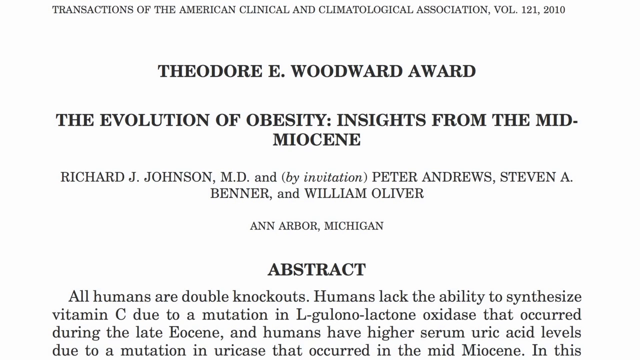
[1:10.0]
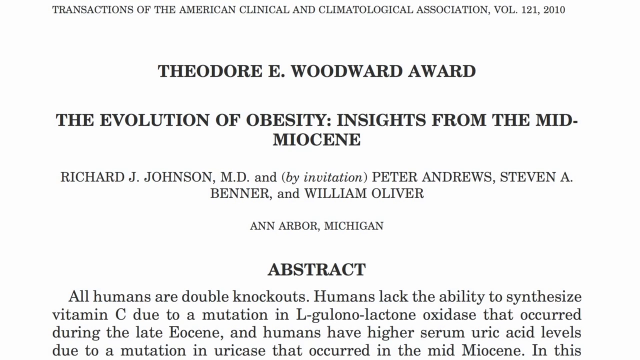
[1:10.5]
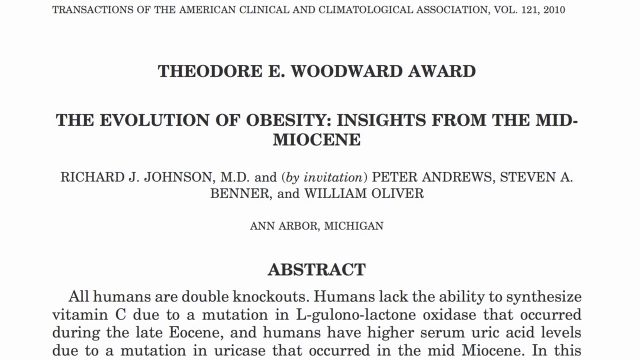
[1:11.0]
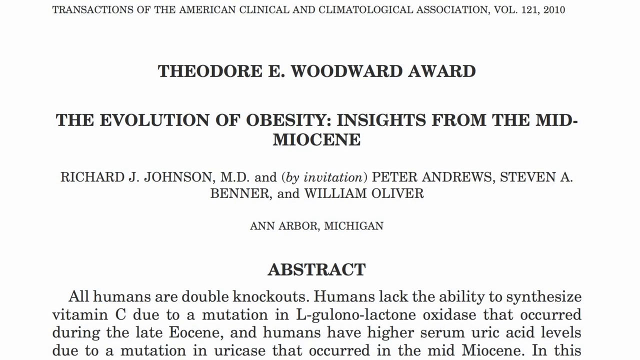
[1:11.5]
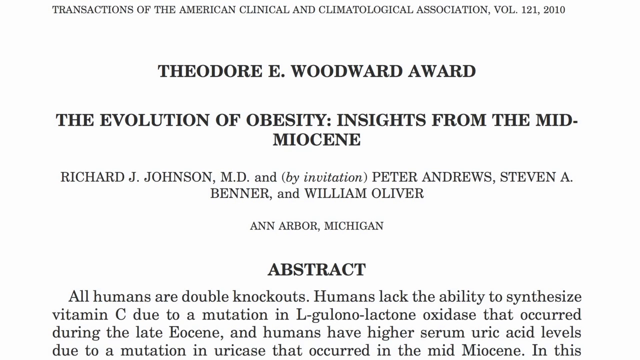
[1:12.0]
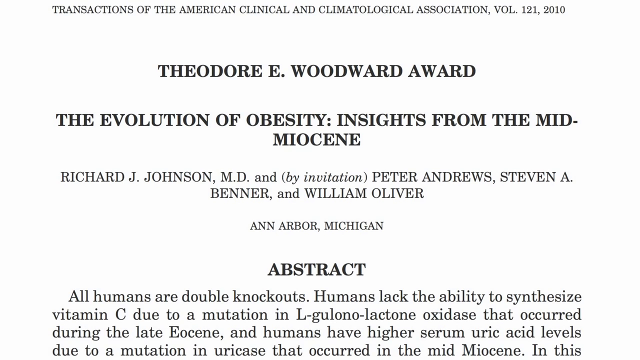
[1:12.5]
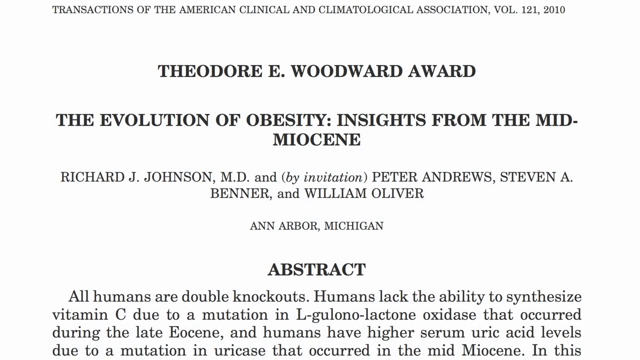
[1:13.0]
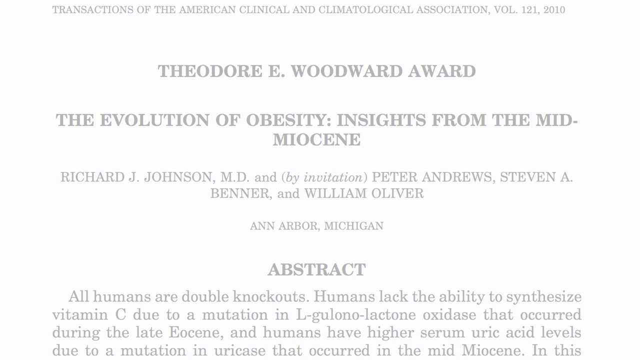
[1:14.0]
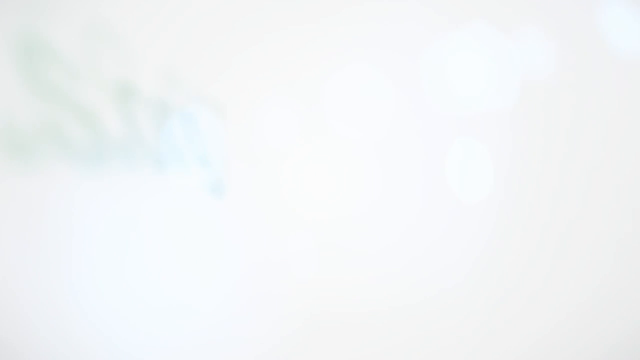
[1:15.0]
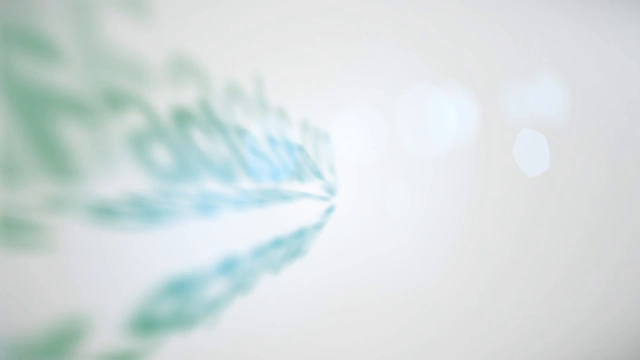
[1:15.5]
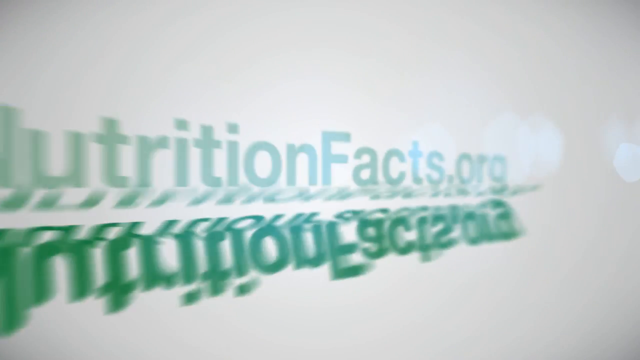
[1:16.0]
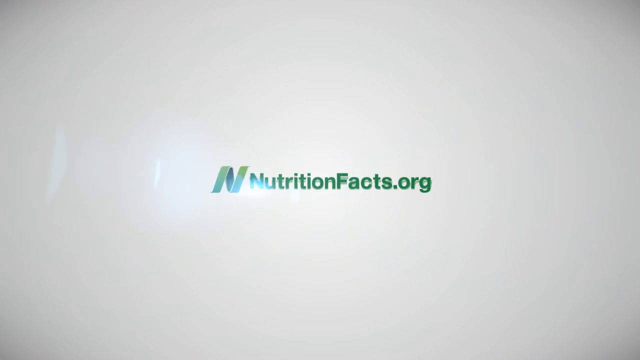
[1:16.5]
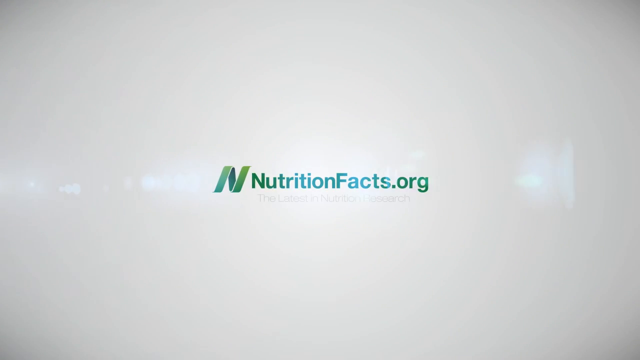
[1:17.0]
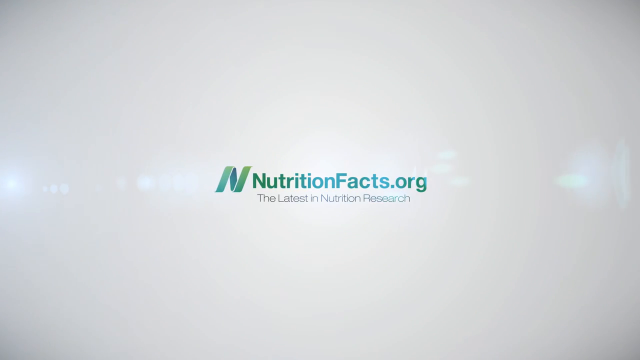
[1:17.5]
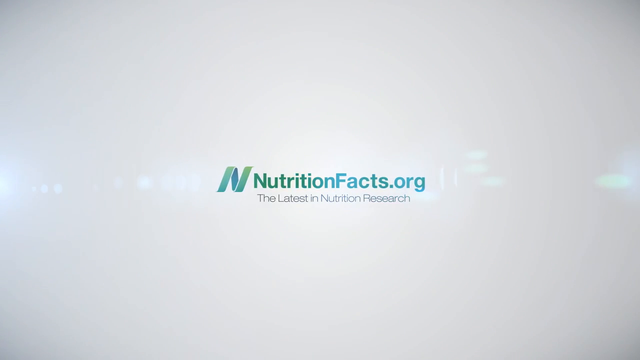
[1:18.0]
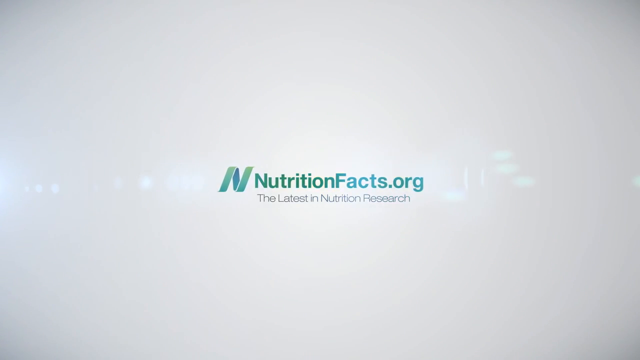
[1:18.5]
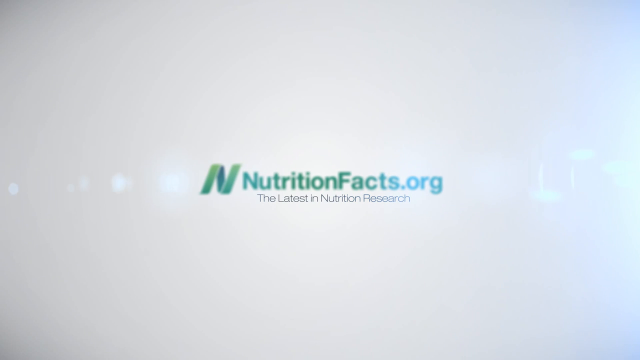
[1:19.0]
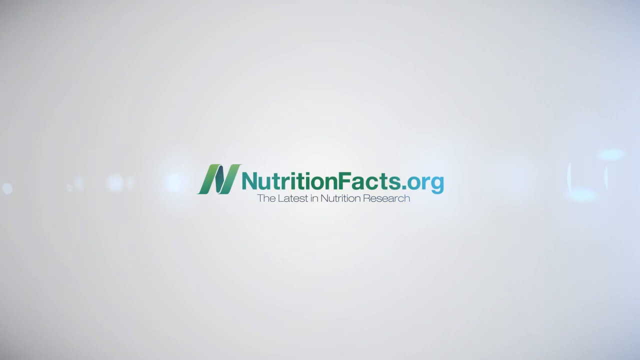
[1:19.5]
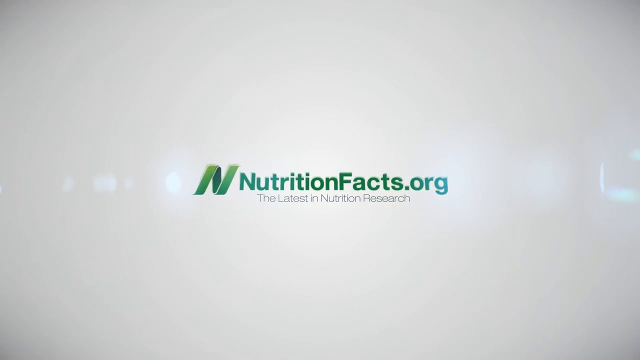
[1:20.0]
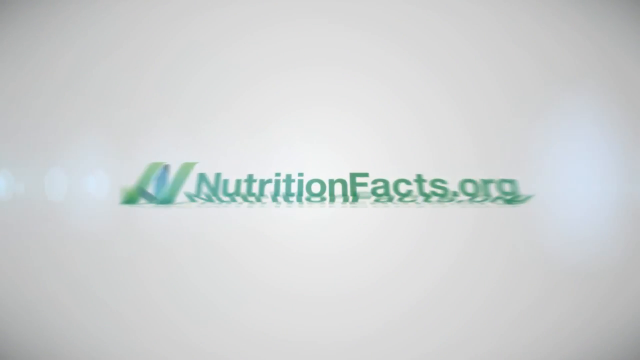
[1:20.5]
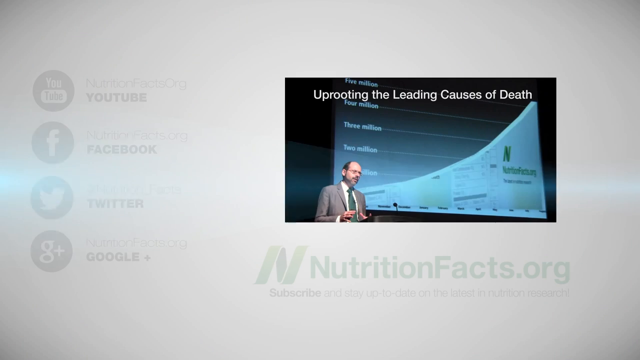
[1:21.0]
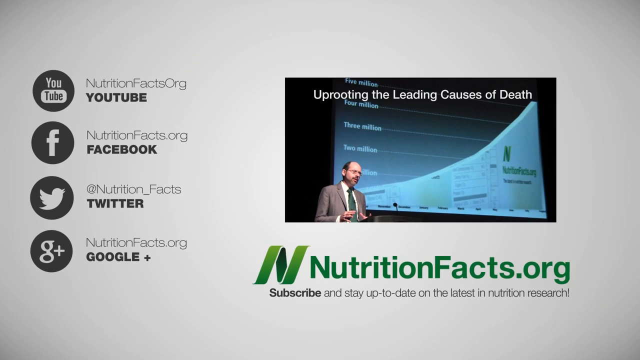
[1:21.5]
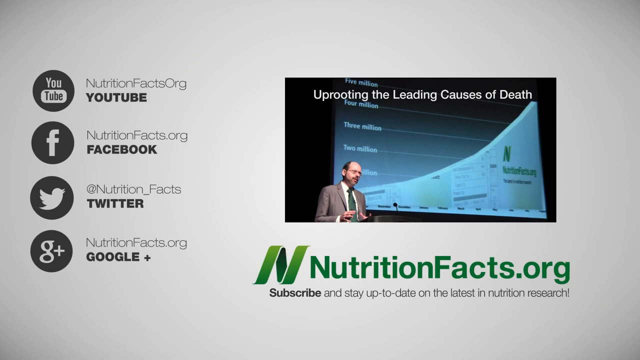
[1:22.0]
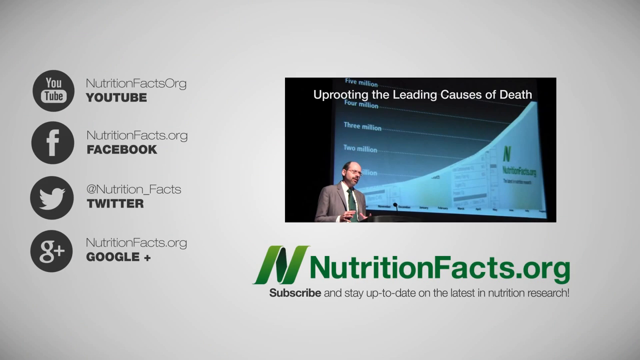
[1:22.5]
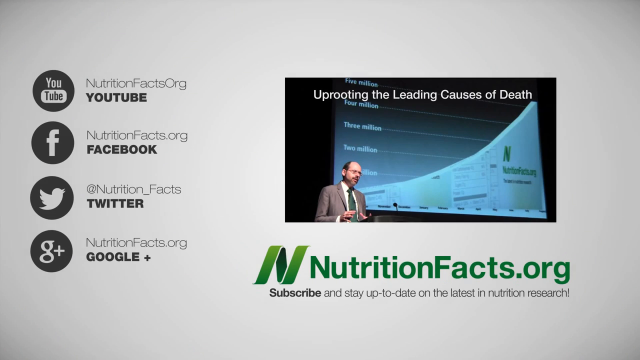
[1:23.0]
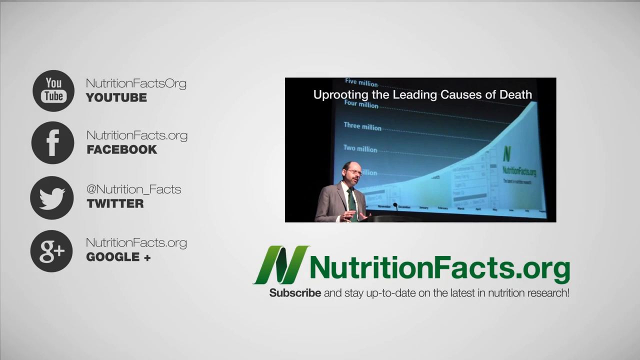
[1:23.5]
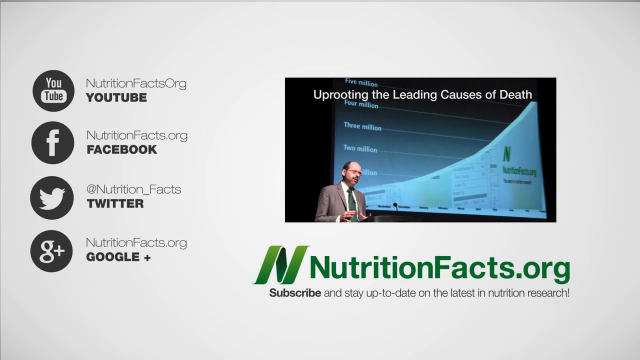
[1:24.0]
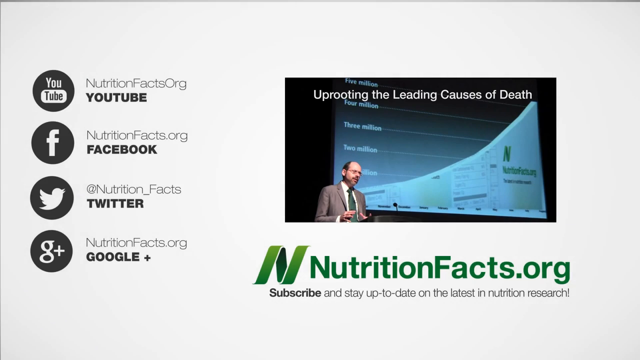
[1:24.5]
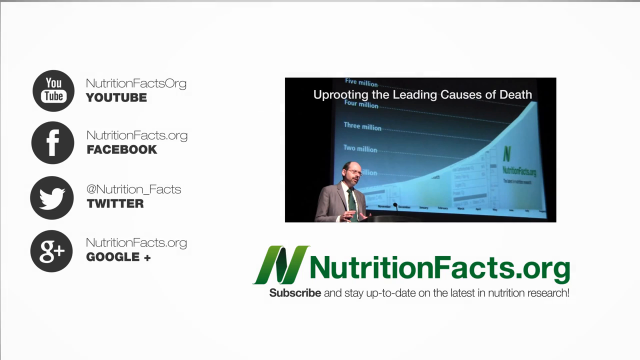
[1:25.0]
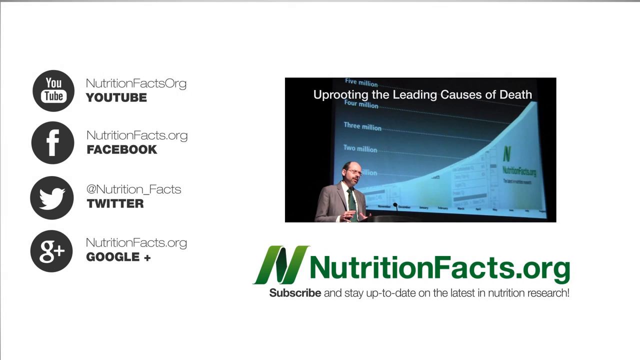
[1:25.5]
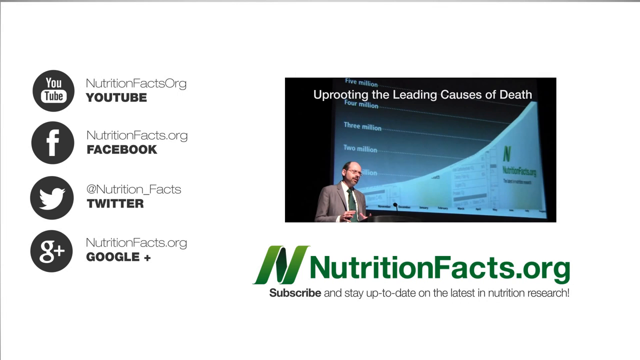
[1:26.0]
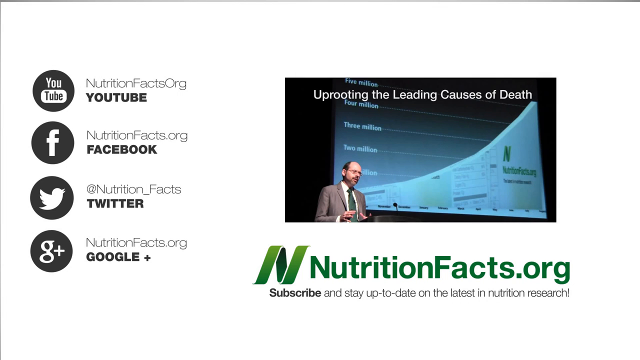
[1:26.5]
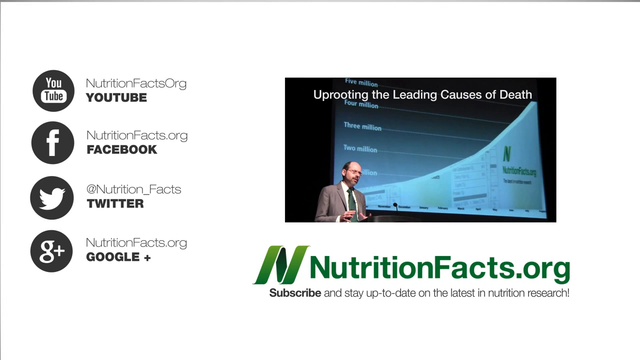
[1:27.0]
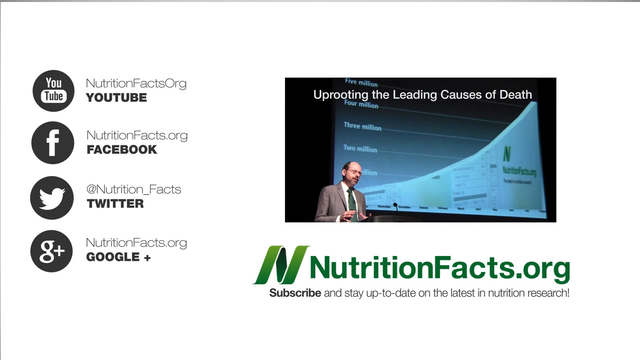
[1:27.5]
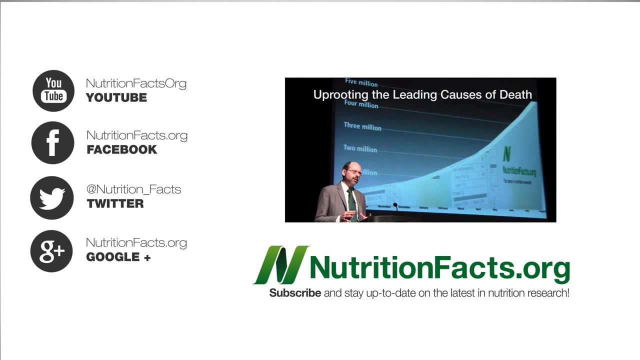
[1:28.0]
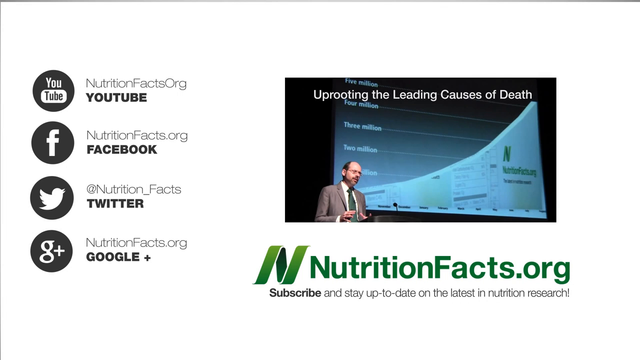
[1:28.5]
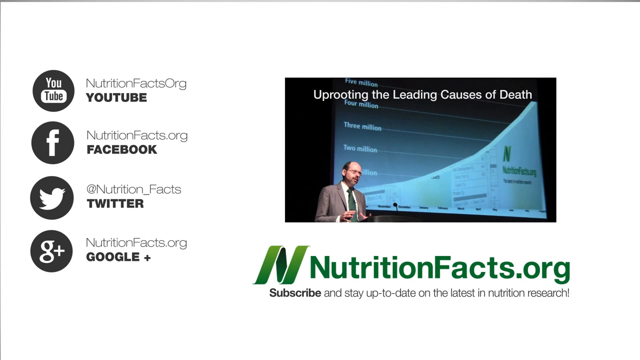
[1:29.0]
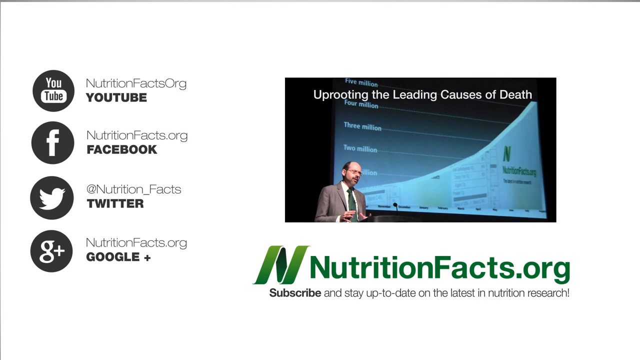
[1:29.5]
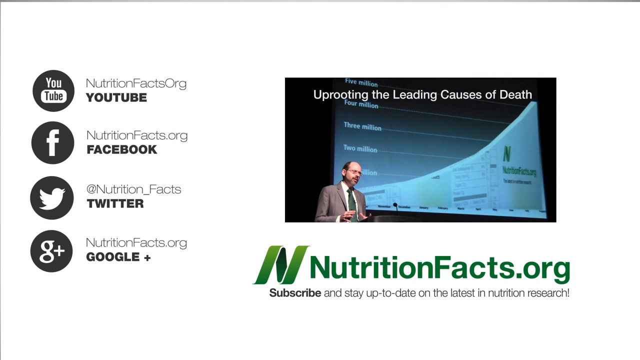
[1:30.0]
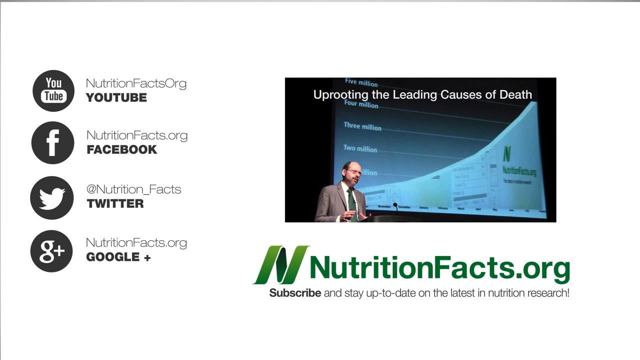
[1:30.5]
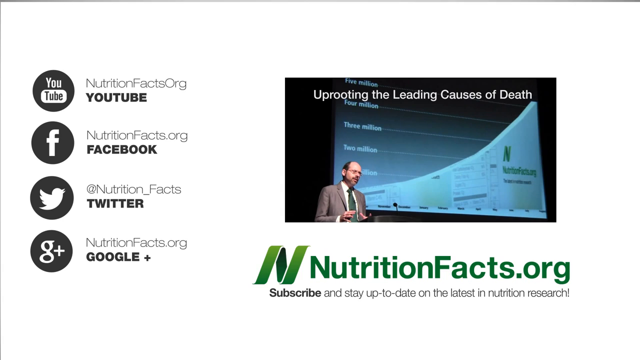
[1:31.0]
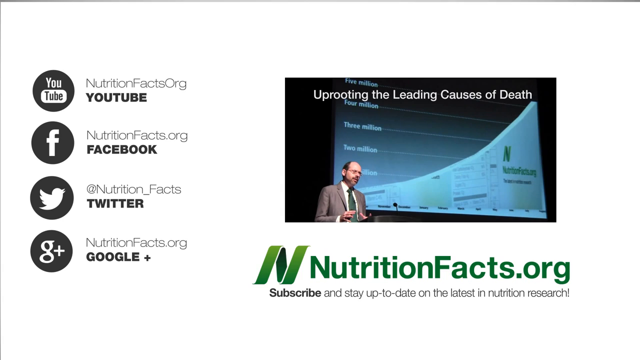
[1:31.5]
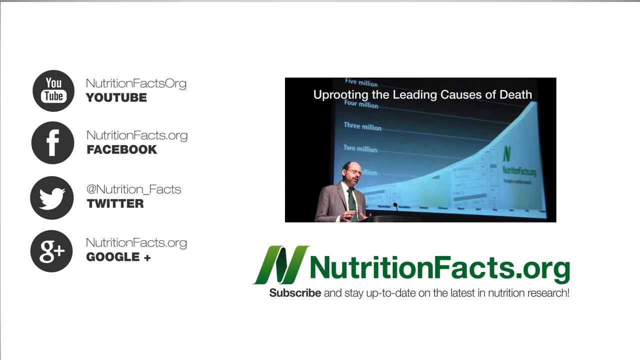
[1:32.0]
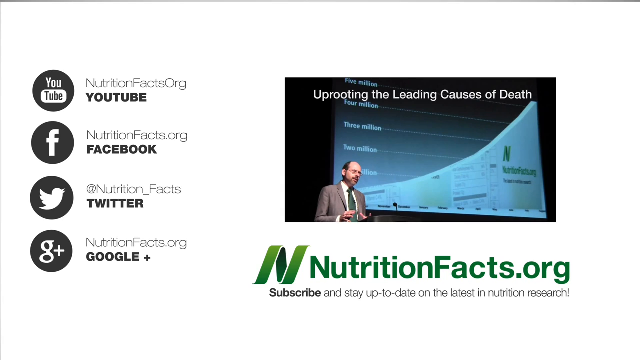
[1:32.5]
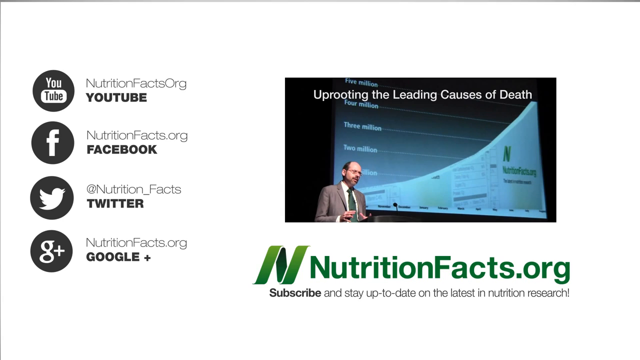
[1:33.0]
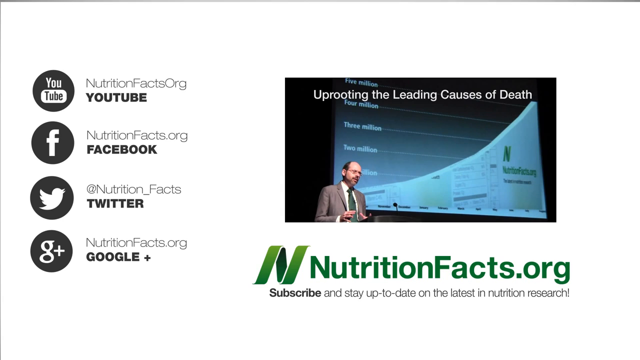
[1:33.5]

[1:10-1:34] A white paper reads "Theodore E. Woodward Award" at the top, with "The Evolution of Obesity, Insights from the Mid-Miocene" below it. Further down is some writing and the word "Abstract," followed by additional written information, and several names are listed on the paper, possibly those of its writers. The screen then changes with what kind of looks like a bolt of light going across it, and a green letter N appears with "nutritionfacts.org" and, below that, "the latest in nutrition research." The screen then changes to a gray background with a video in a square and the text "uprooting the leading cause of death," along with "nutritionfacts.org" again. Some social media sites are on the left side of the screen.